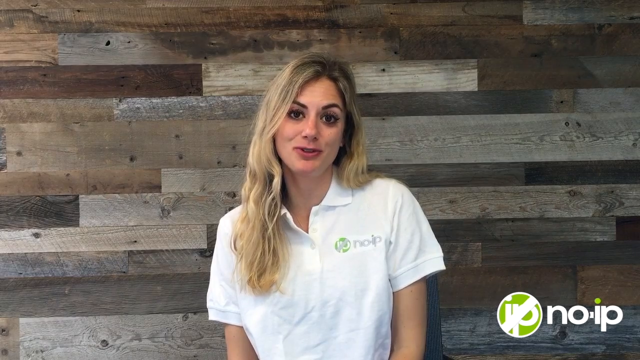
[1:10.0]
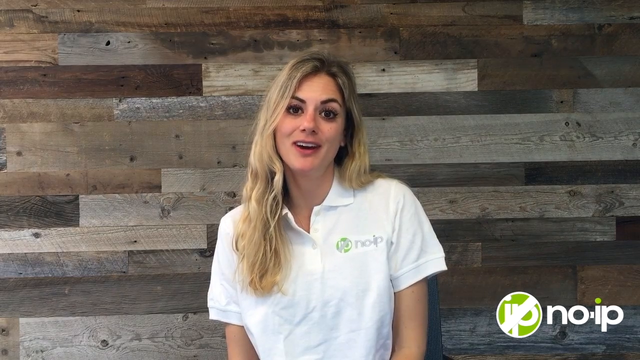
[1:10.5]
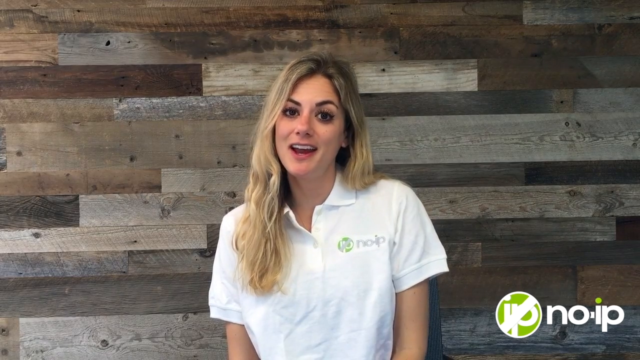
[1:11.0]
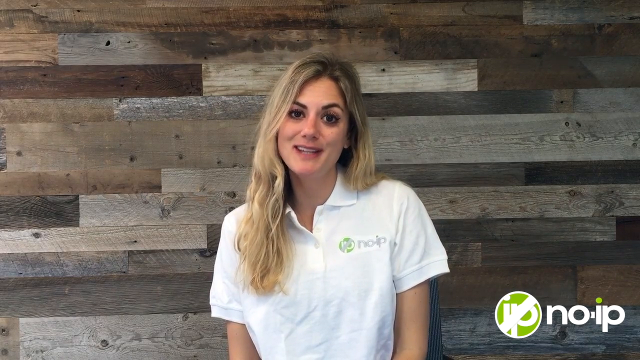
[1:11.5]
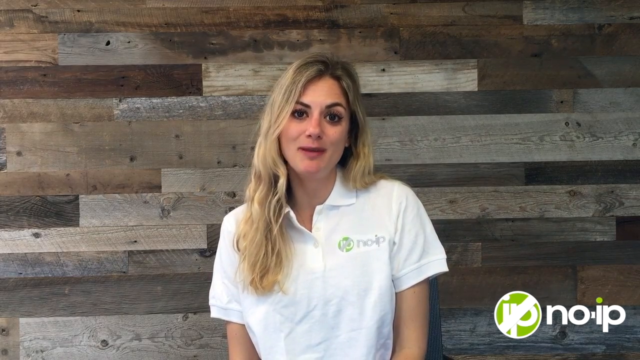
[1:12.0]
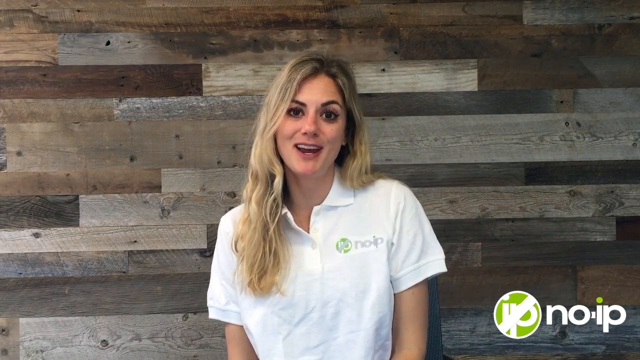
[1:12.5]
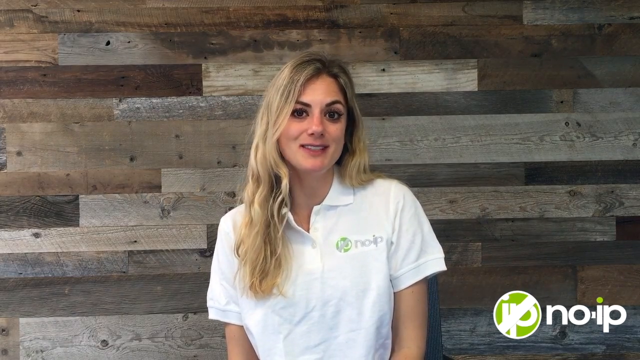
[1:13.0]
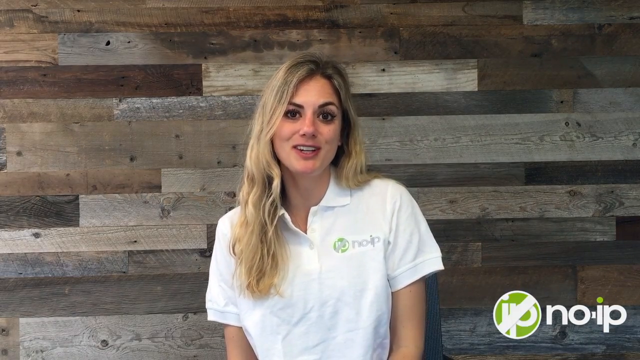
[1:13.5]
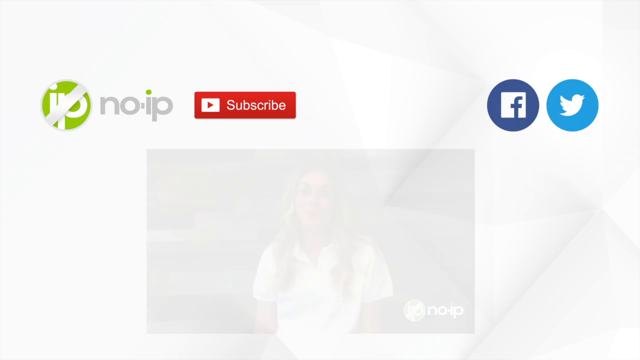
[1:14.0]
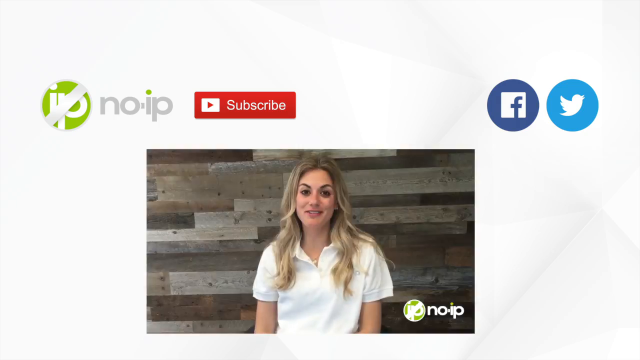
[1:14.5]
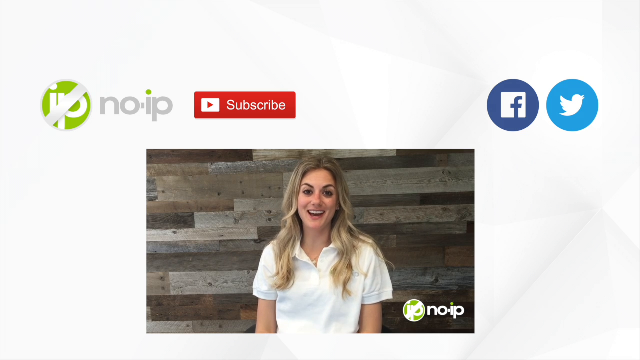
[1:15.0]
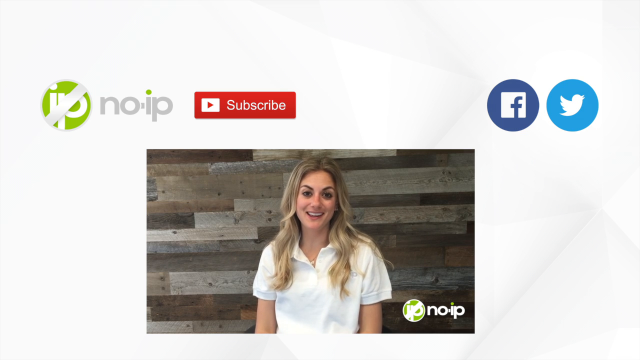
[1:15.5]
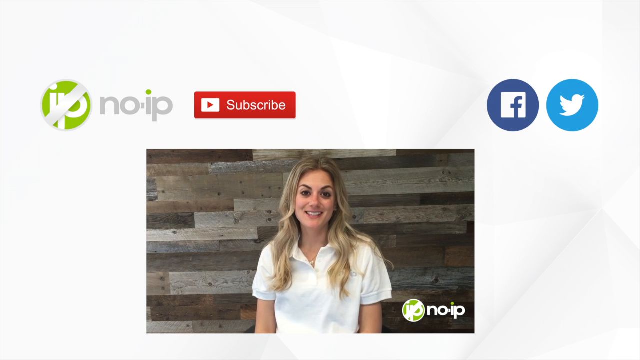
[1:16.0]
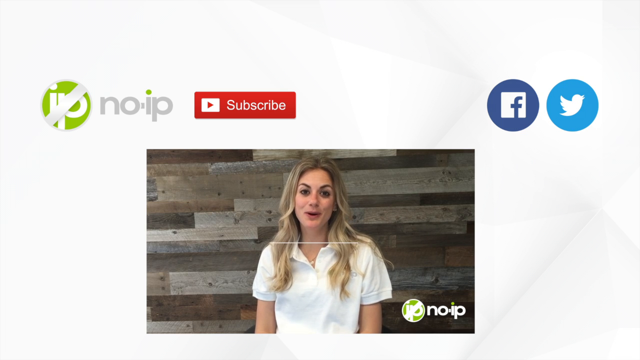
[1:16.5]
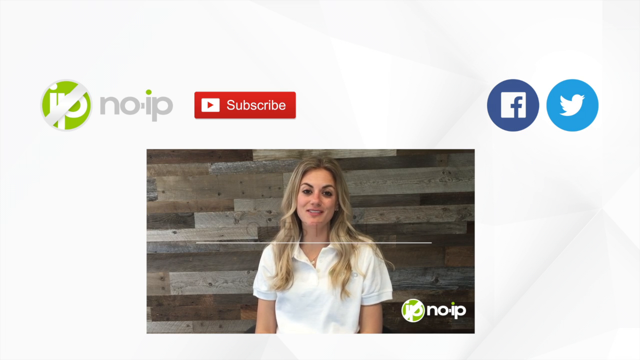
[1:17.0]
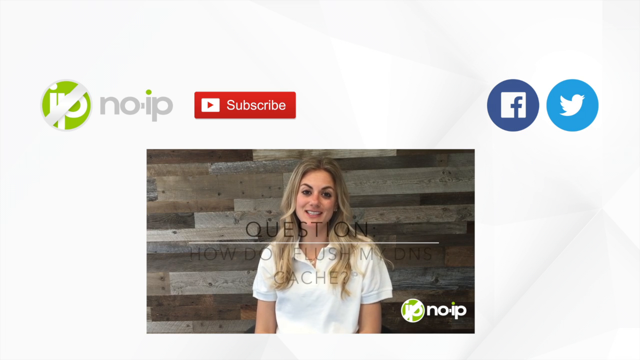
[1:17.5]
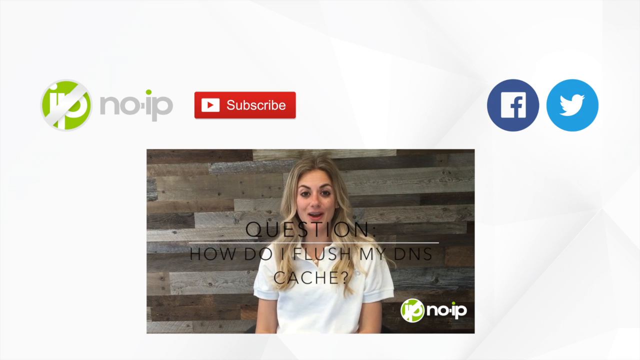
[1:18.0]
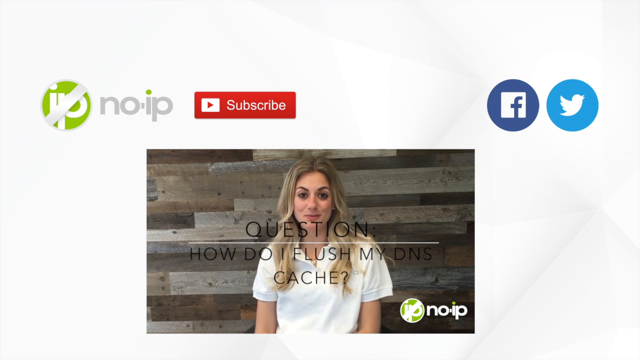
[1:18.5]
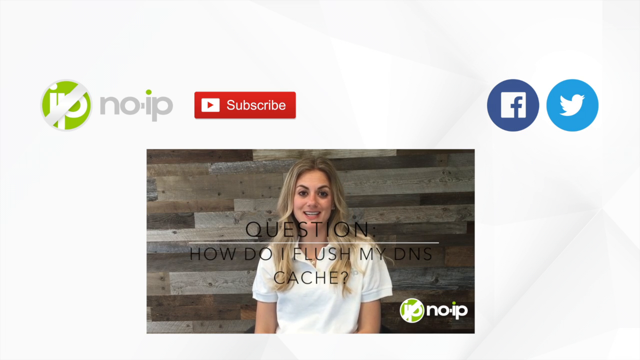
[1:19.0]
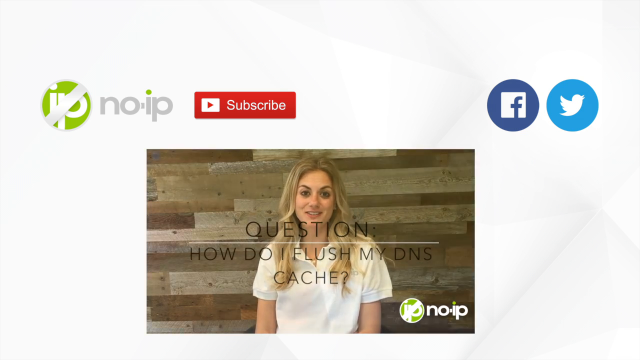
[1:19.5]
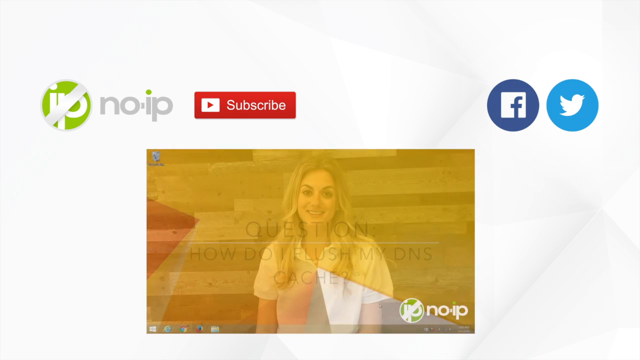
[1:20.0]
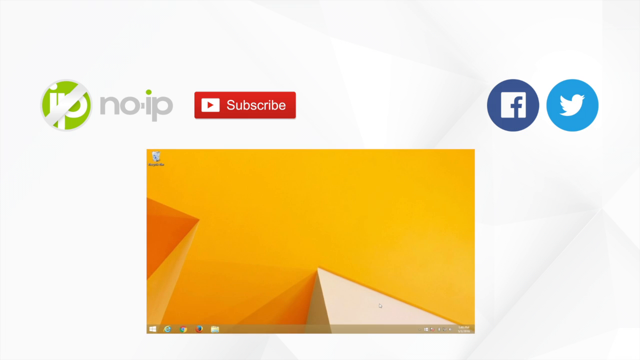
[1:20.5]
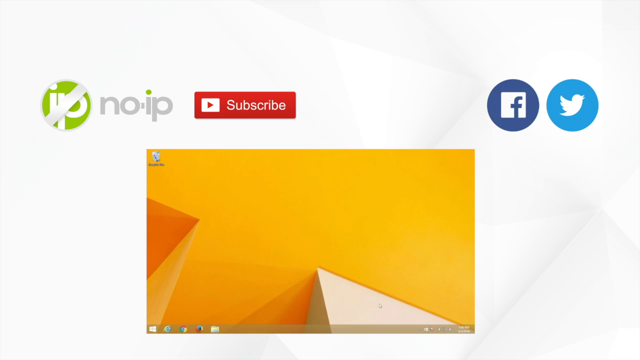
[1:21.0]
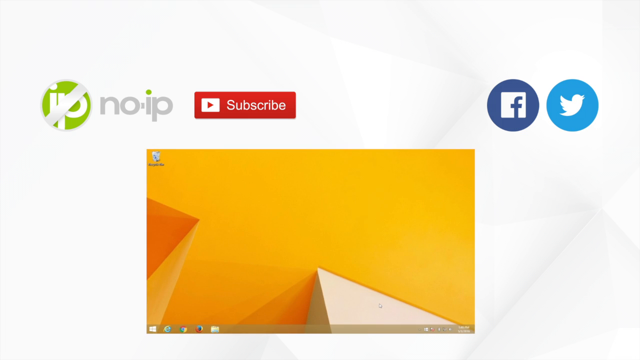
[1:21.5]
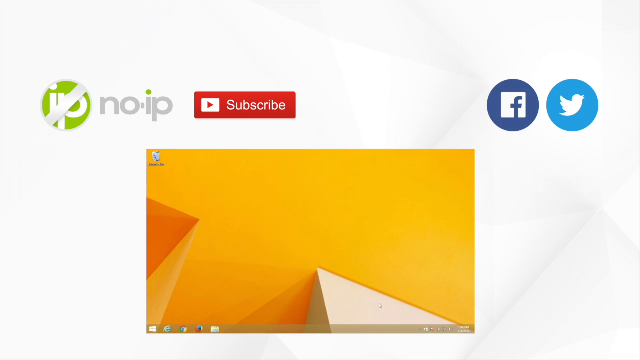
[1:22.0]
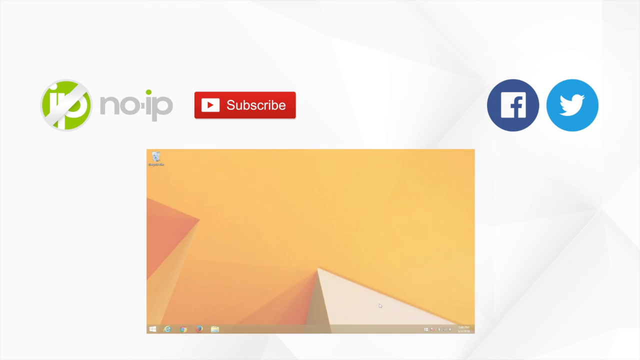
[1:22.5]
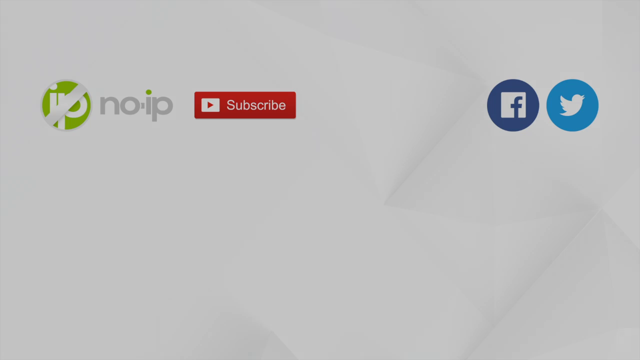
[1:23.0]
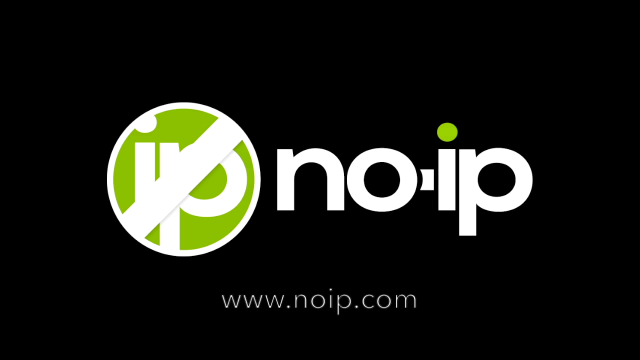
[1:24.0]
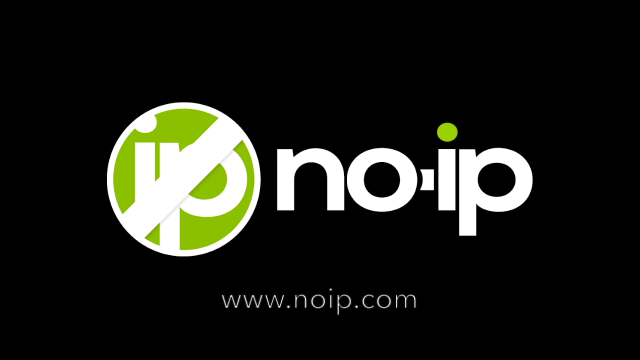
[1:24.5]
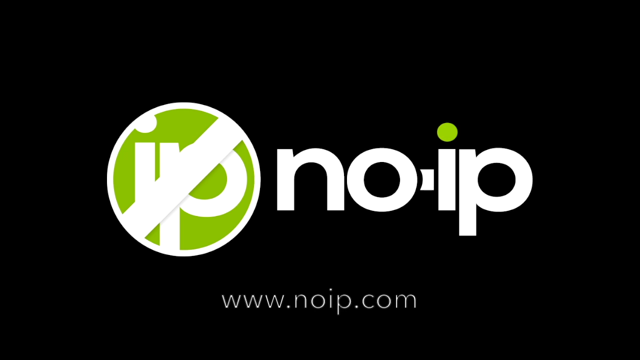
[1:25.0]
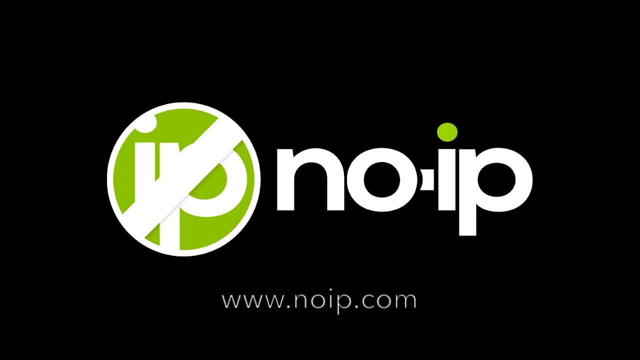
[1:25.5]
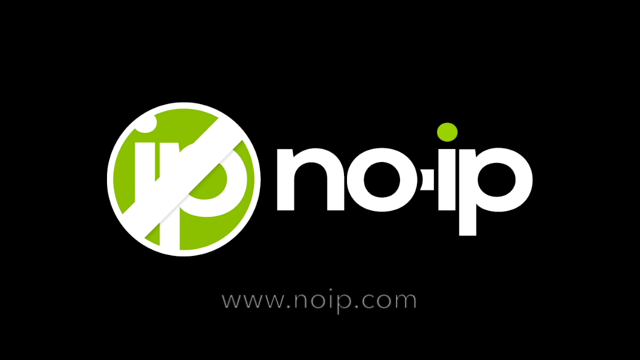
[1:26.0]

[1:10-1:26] In the closing of the ad for No-IP, the blonde woman in the white polo shirt with the No-IP logo is talking. The picture then scrolls back, and she appears in a smaller box in the middle, with the No-IP logo and a subscribe option above it. To the right at the top are a Facebook logo and a Twitter logo. Next comes the question "how do I flush my DNS cache?", which scrolls off, followed by a yellow box with a couple of pyramids on it. The video then backs out to a completely black screen that just says "No-IP" in black, with "www.noip.com" underneath.